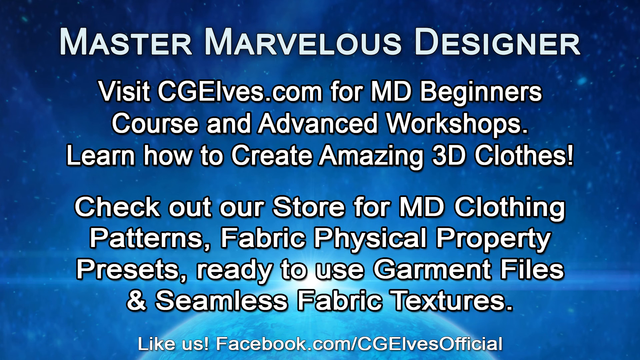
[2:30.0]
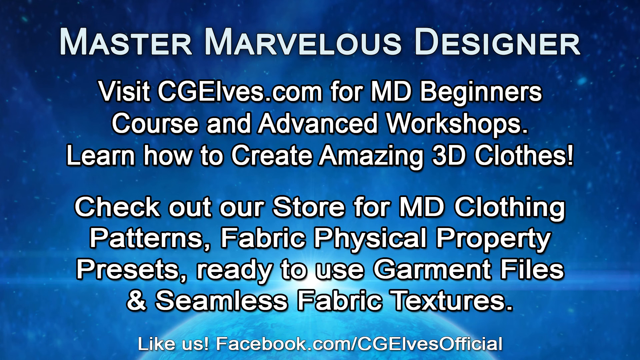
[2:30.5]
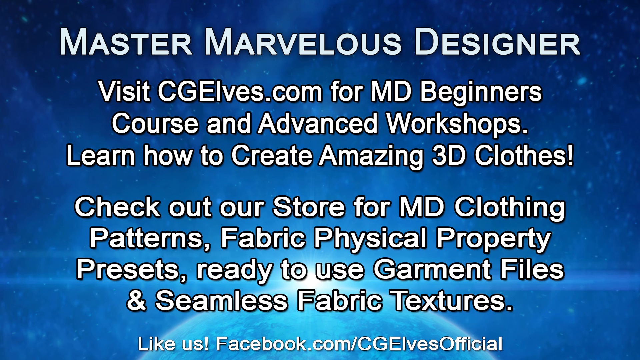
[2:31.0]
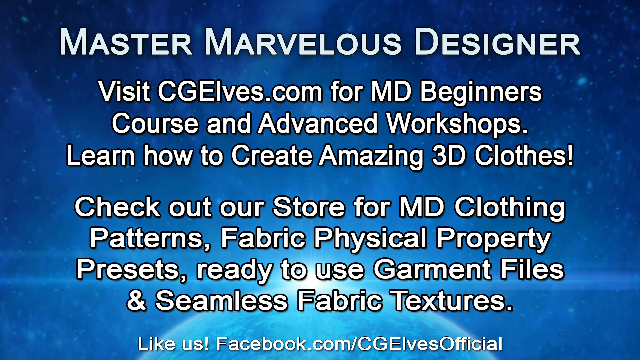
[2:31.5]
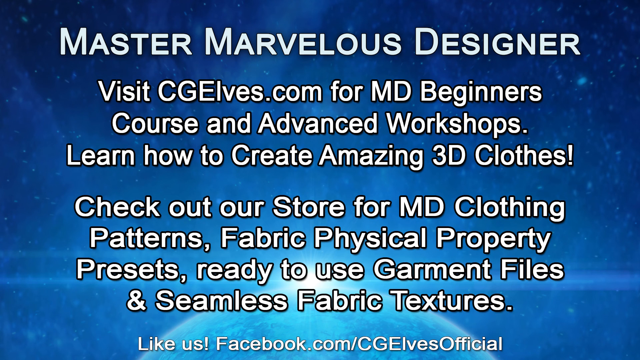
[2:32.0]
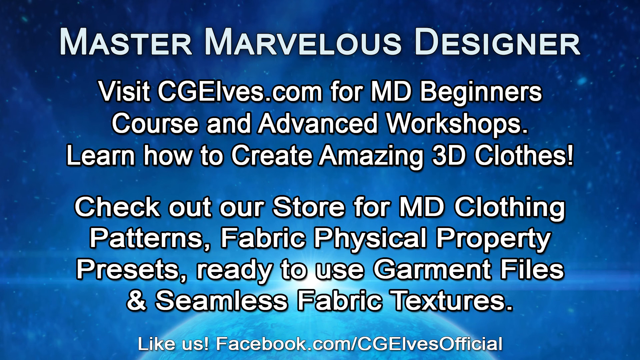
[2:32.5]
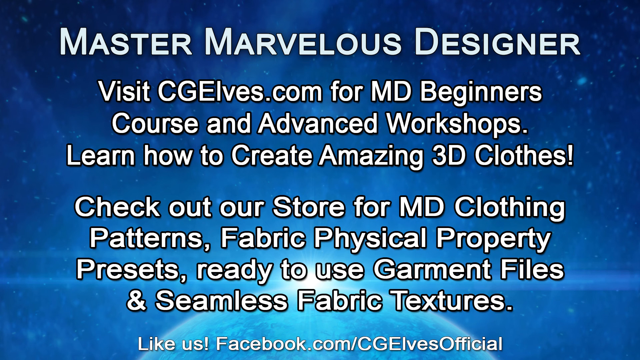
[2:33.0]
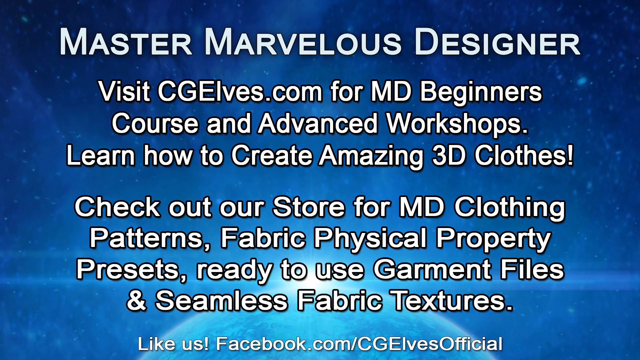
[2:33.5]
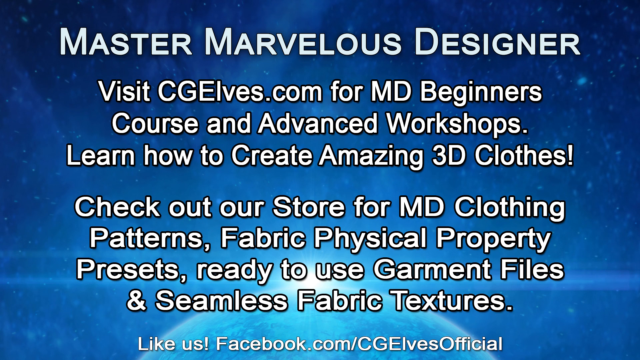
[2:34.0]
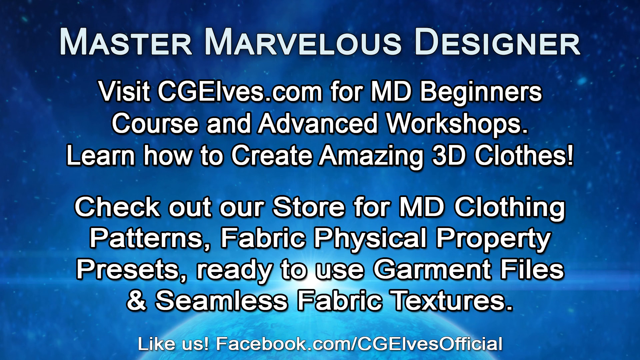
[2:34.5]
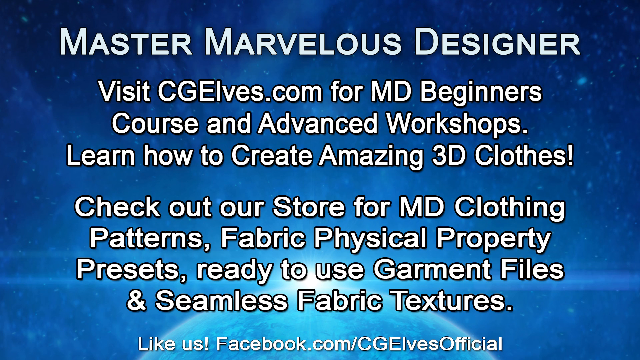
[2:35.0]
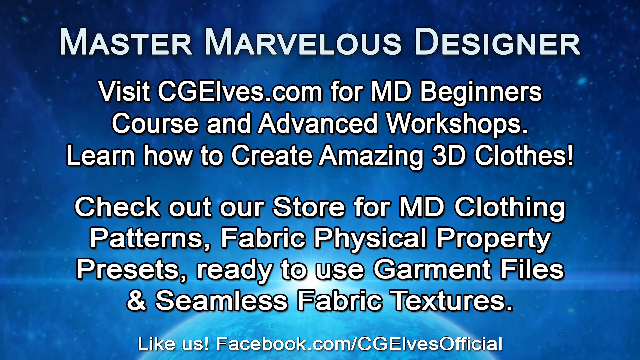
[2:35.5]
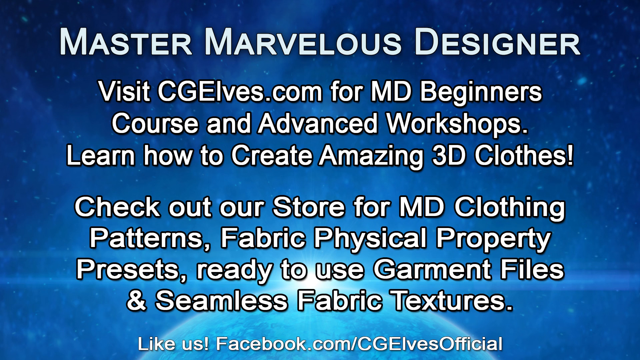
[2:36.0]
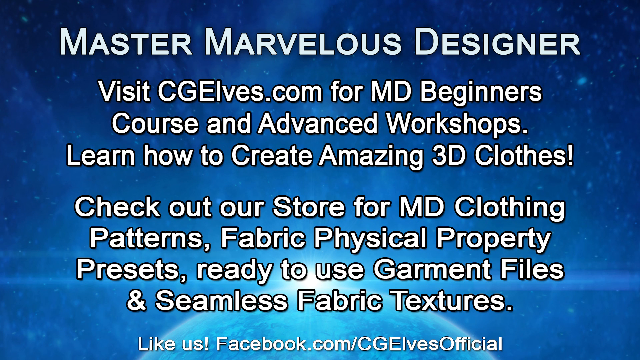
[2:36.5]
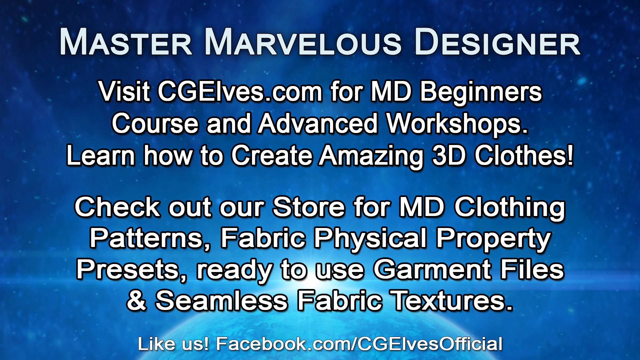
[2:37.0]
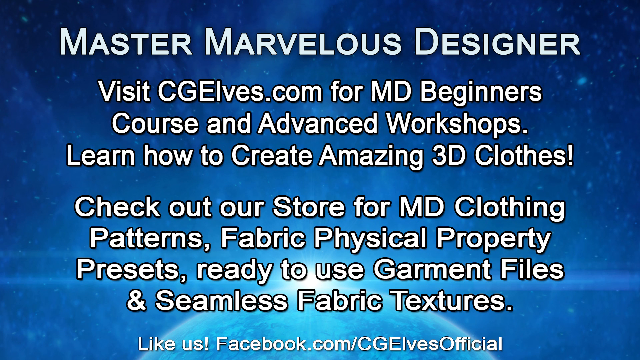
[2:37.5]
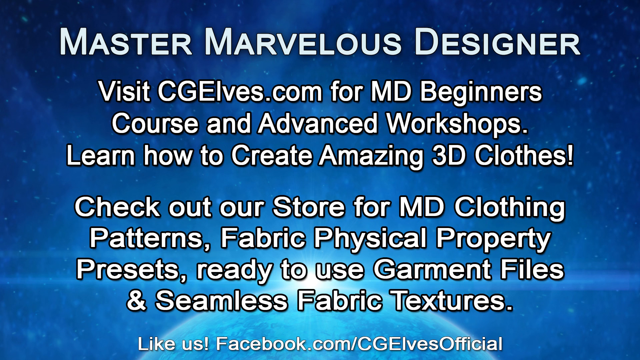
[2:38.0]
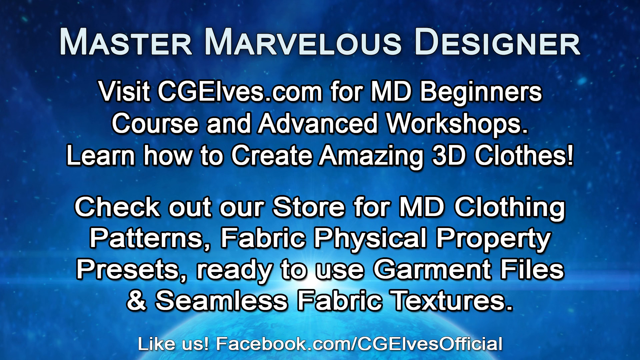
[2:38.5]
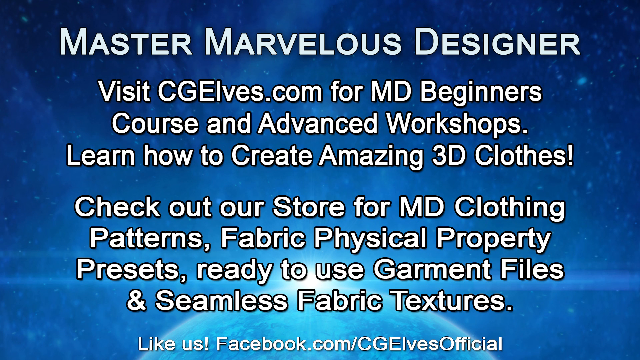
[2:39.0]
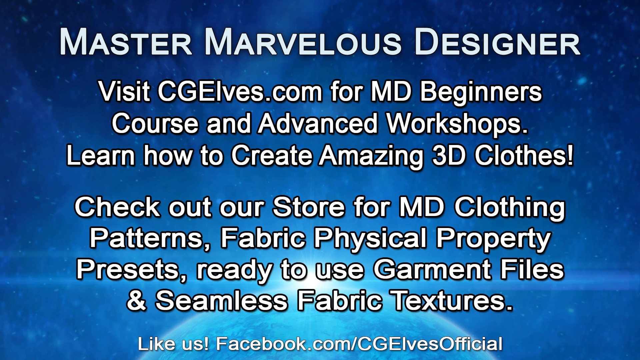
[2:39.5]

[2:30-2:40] The same page remains on screen, with "Master Marvelous Designer" and "Visit cgls.com for MD beginners course and advanced workshops," along with text about learning how to create amazing 3d clothes and checking out their store for clothing patterns, fabric, physical property presets, garment files and seamless fabric textures.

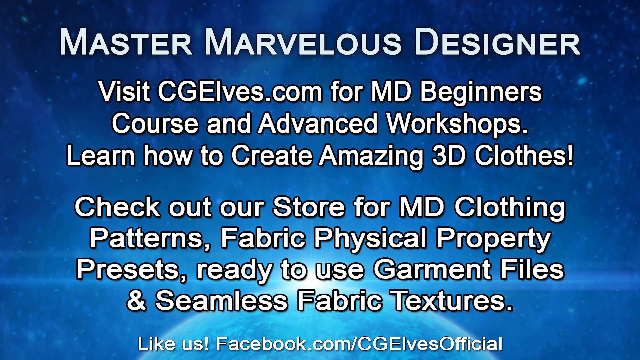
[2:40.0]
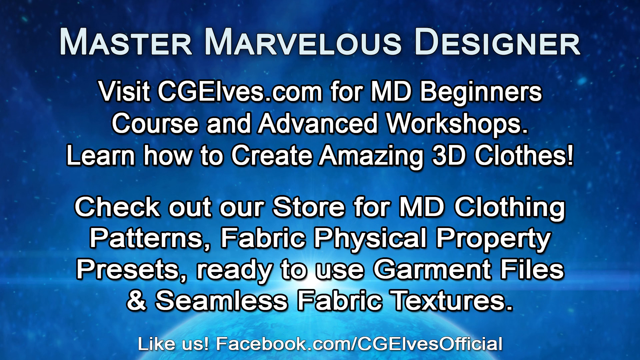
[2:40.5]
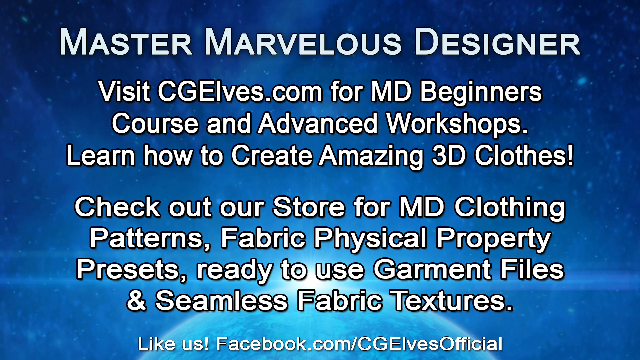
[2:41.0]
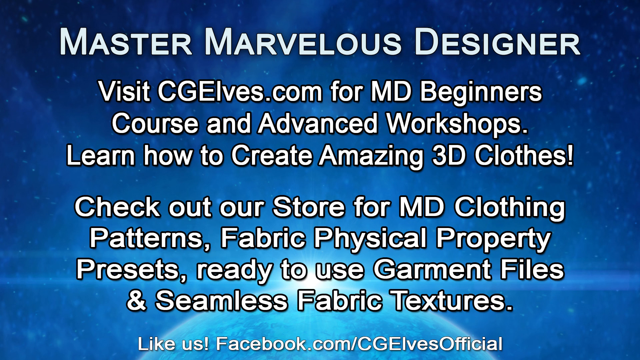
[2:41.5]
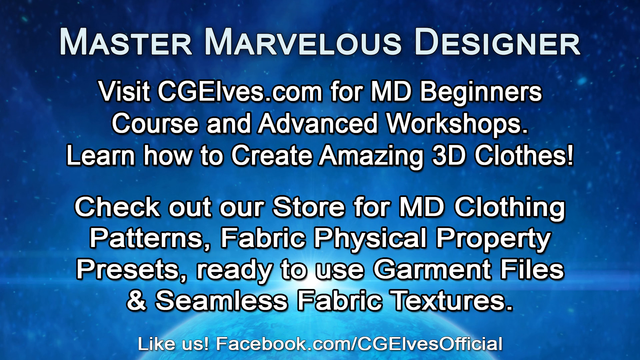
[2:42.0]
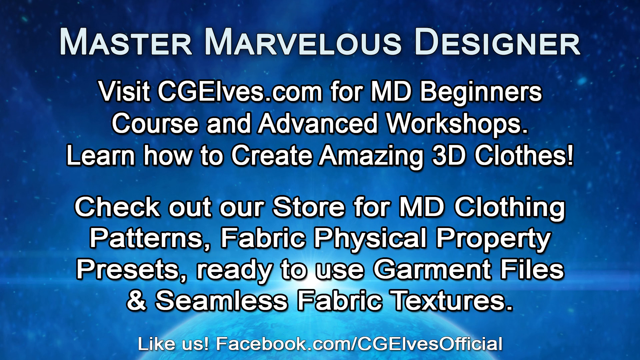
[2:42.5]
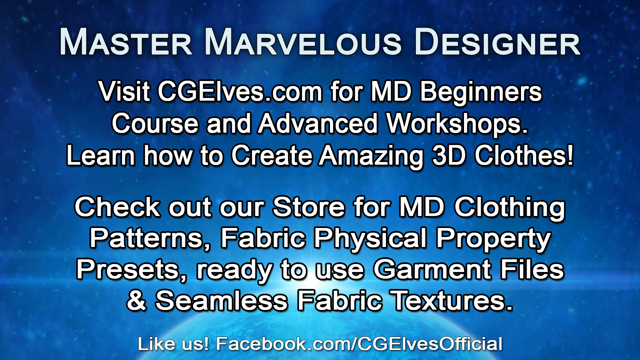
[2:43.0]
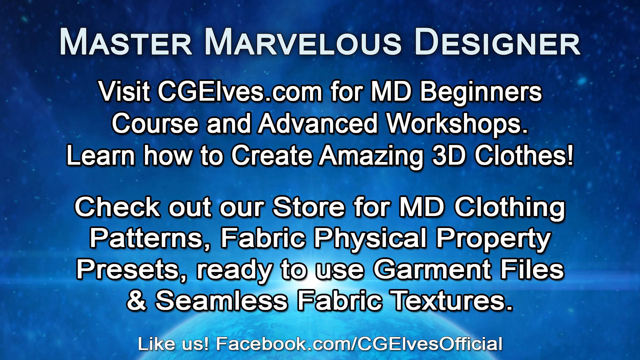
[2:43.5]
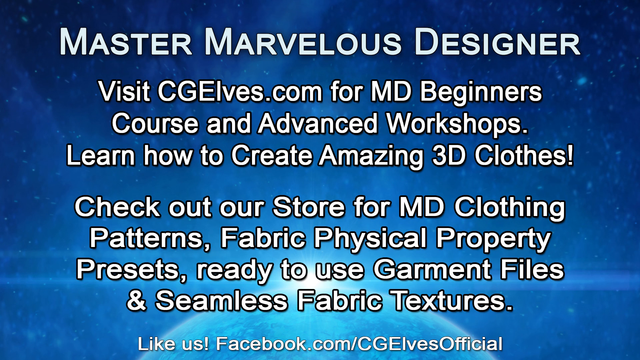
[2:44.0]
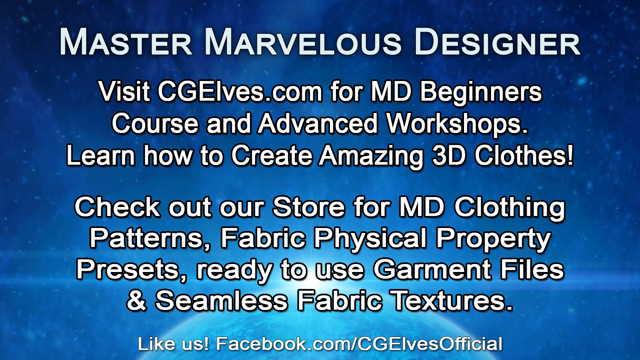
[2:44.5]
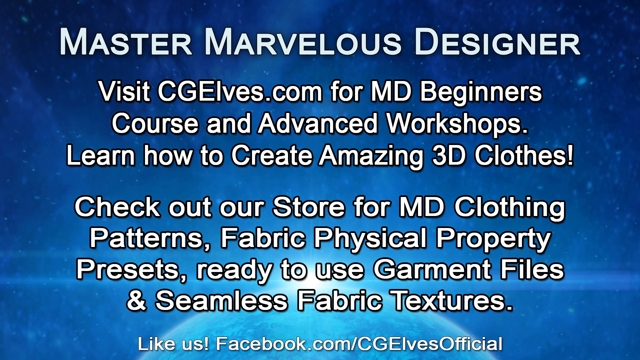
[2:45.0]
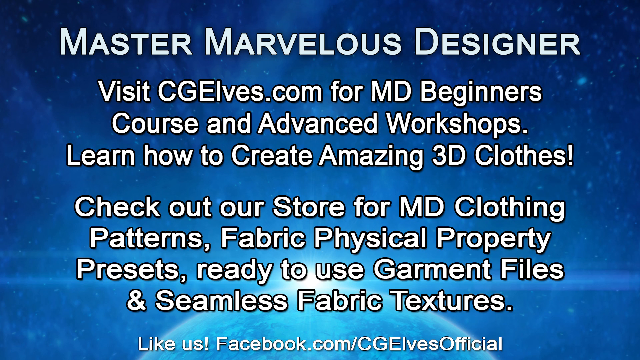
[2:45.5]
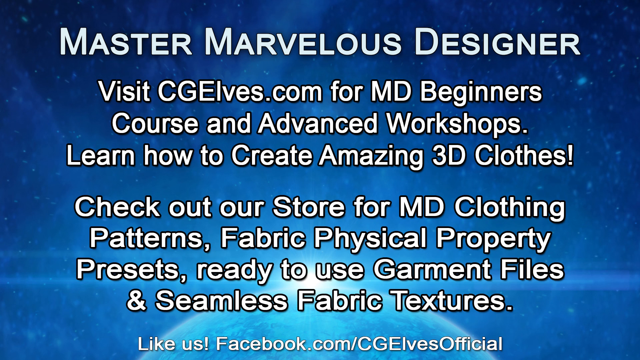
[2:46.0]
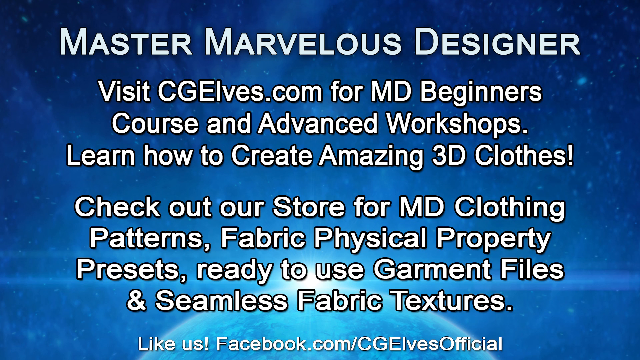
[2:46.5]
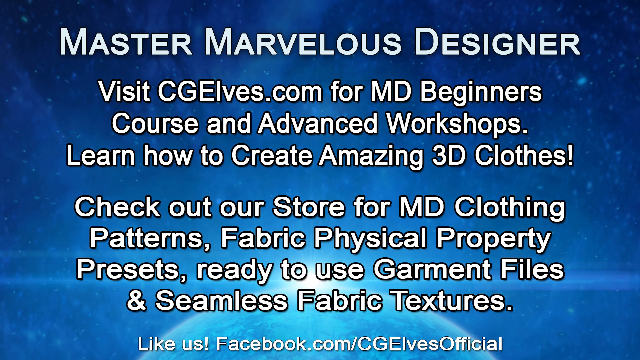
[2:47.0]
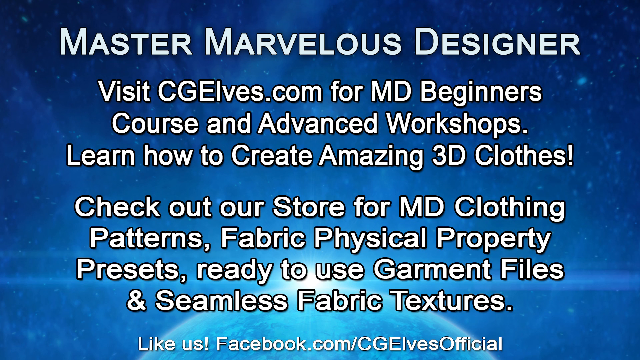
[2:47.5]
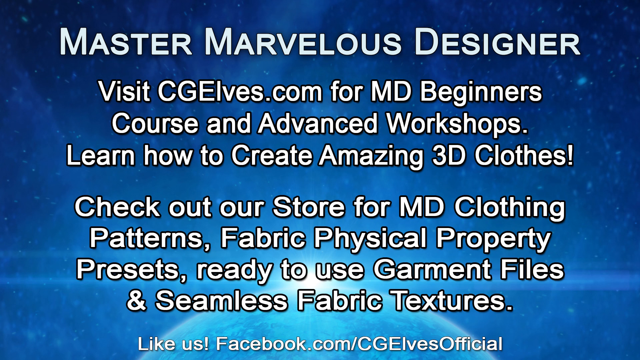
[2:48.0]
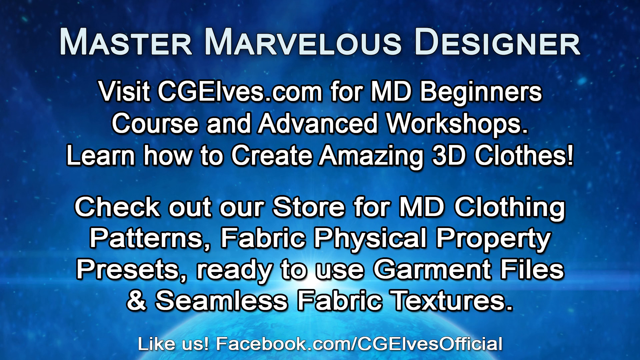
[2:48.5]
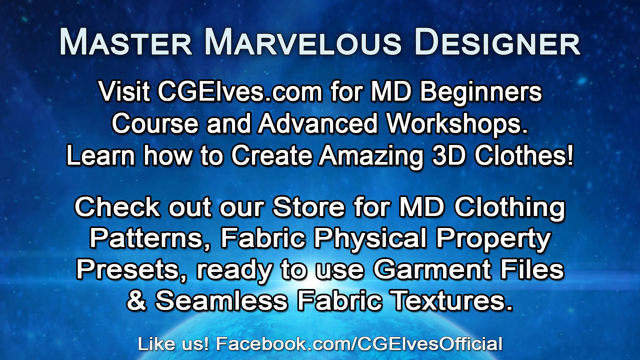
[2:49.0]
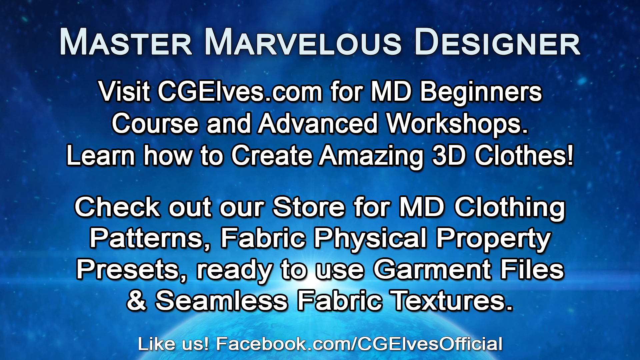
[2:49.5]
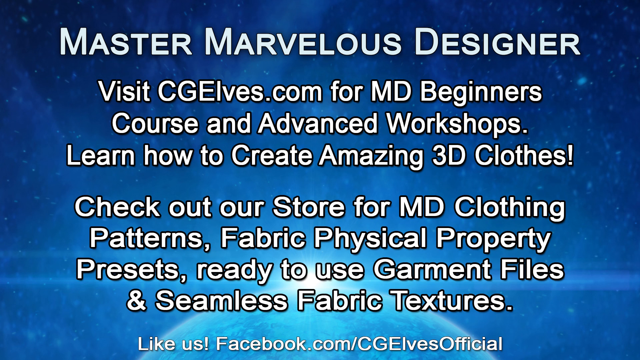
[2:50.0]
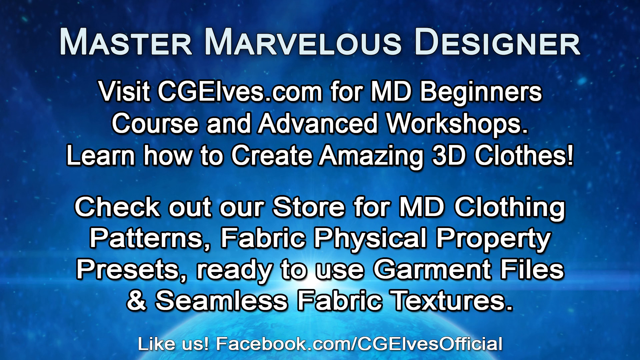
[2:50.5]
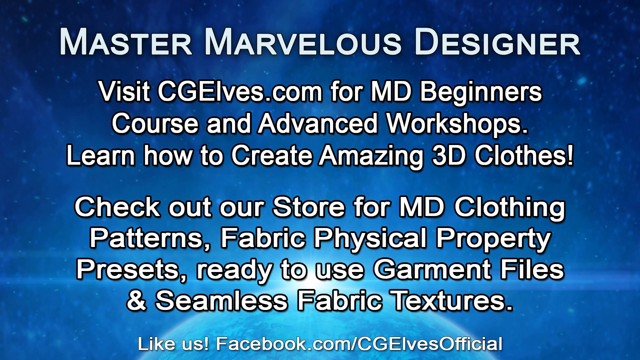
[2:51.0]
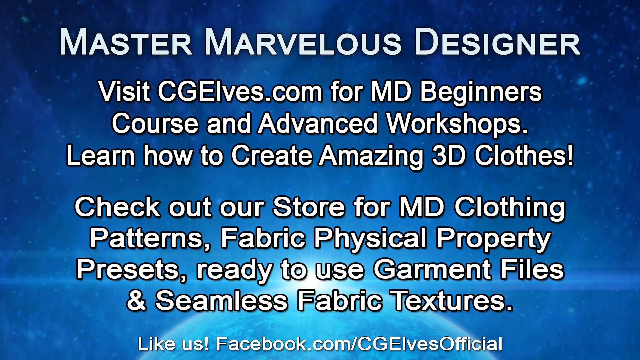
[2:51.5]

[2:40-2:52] The same screen stays up. The lettering is white and shows well against the blue background. The title "master marvelous designer" is bigger than the rest of the writing, and the other writing is kind of off-white rather than true white. The text is split into two separate paragraphs, one about taking their courses and one about checking out their store.